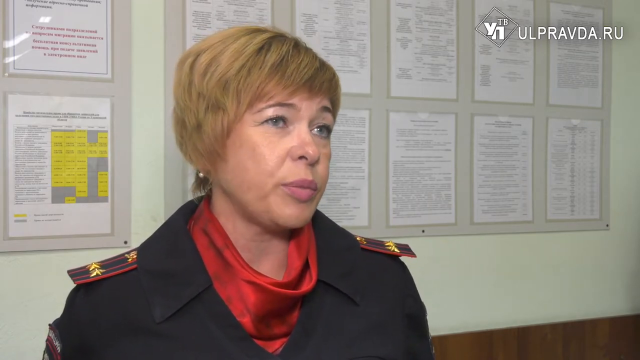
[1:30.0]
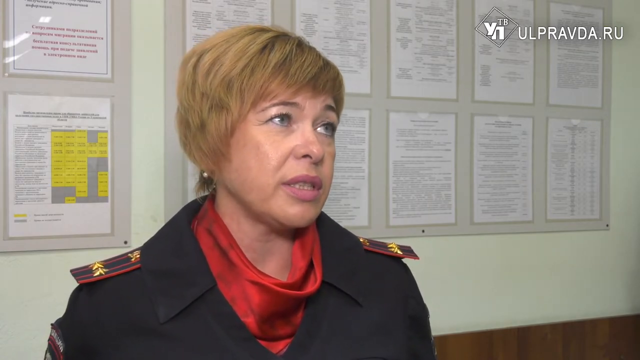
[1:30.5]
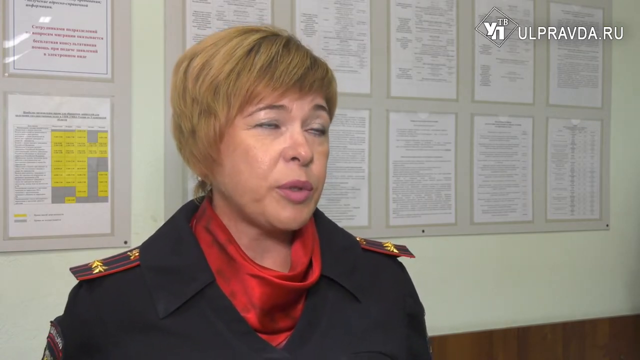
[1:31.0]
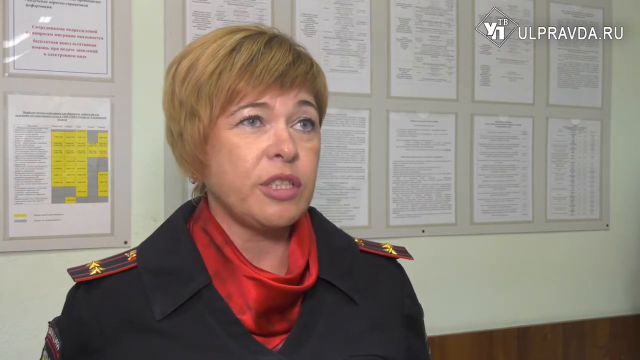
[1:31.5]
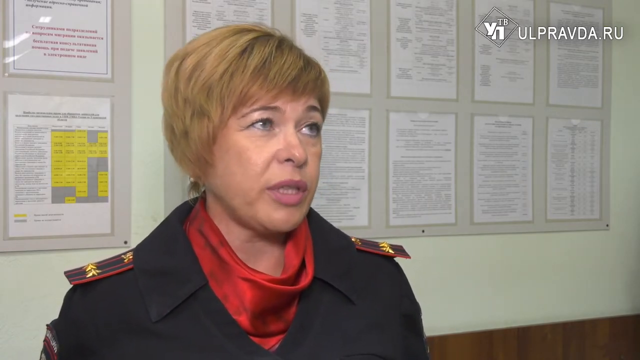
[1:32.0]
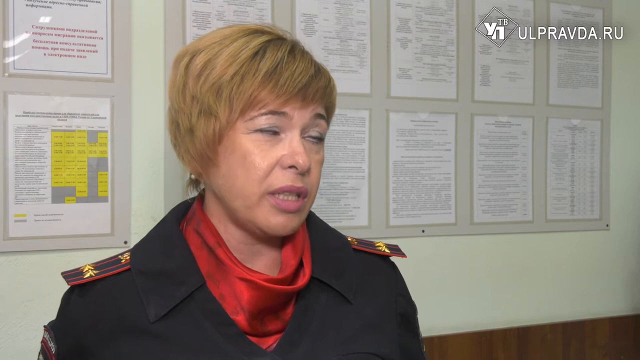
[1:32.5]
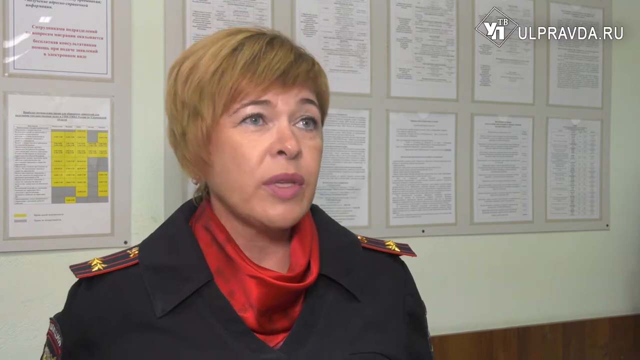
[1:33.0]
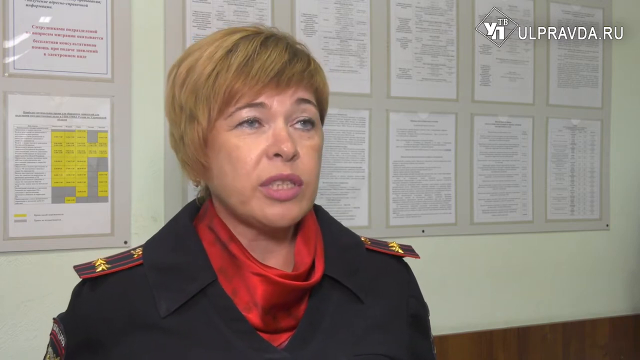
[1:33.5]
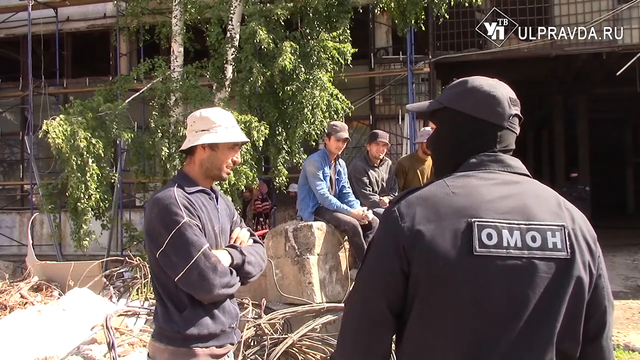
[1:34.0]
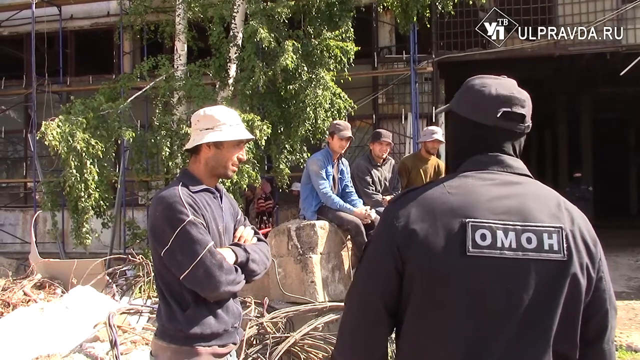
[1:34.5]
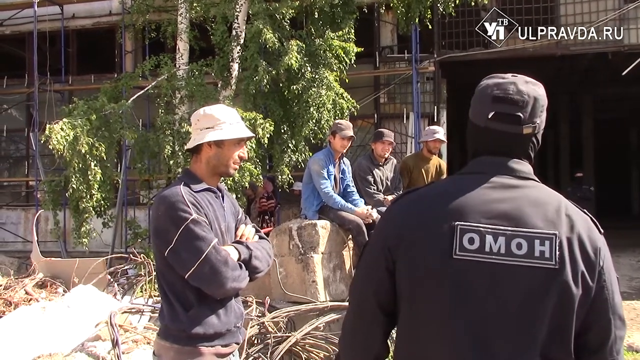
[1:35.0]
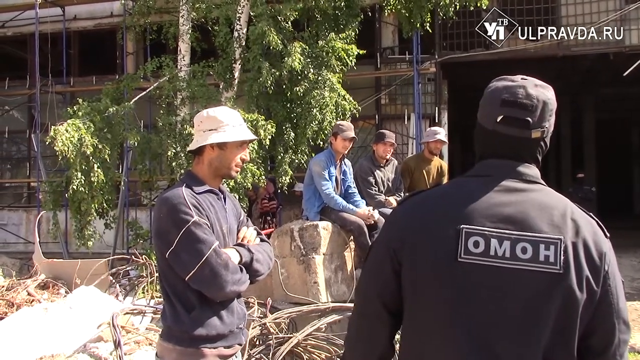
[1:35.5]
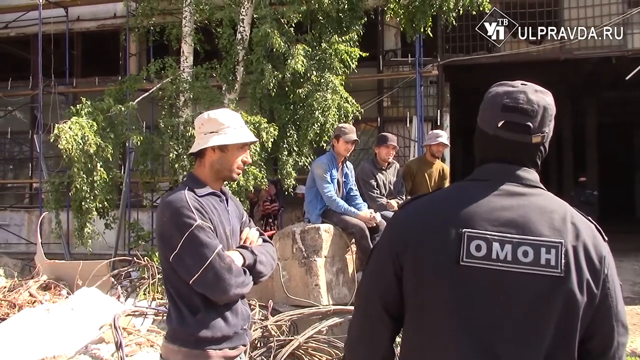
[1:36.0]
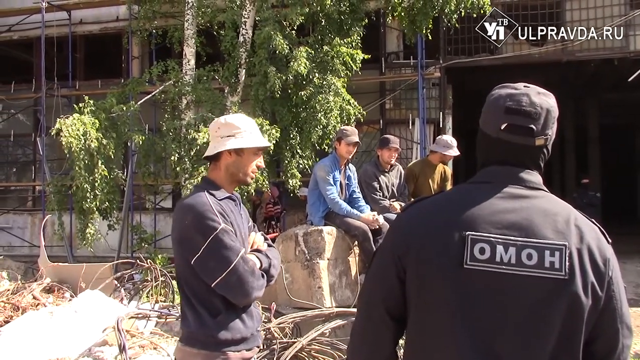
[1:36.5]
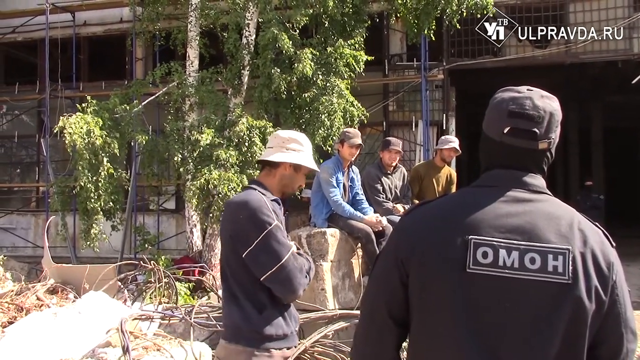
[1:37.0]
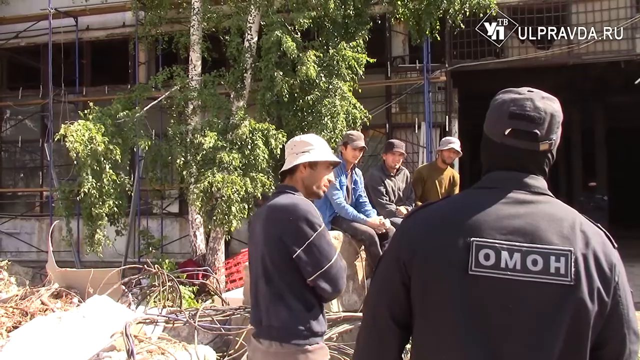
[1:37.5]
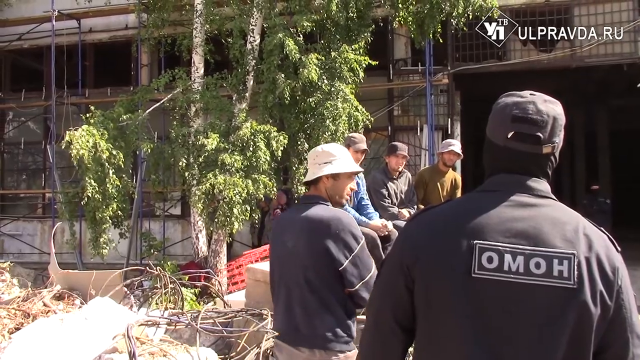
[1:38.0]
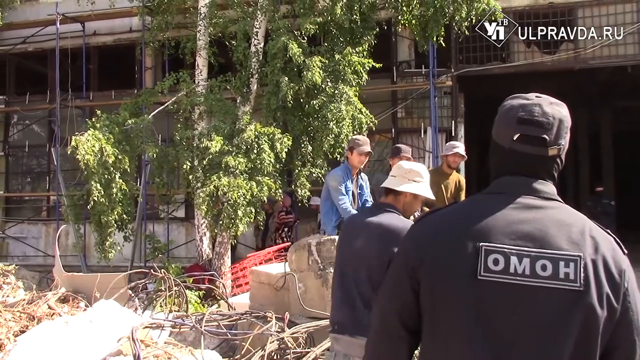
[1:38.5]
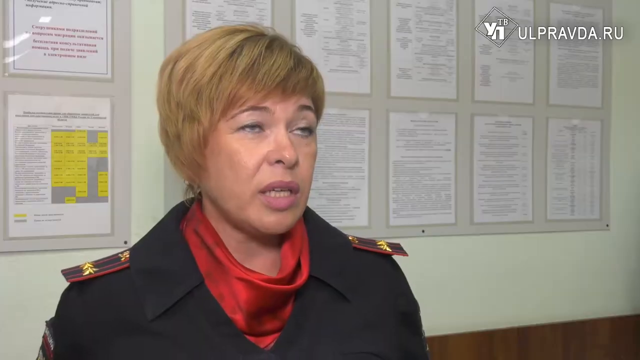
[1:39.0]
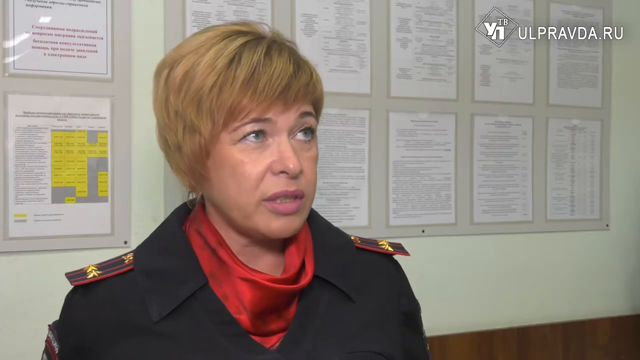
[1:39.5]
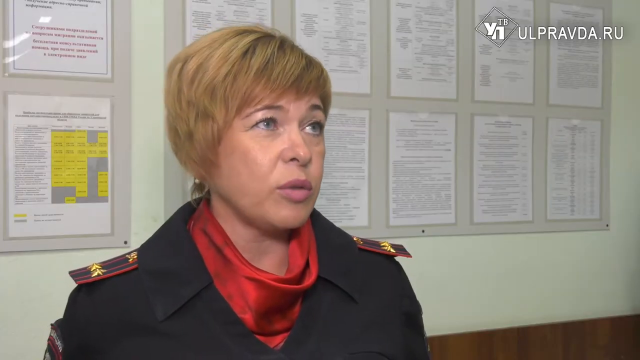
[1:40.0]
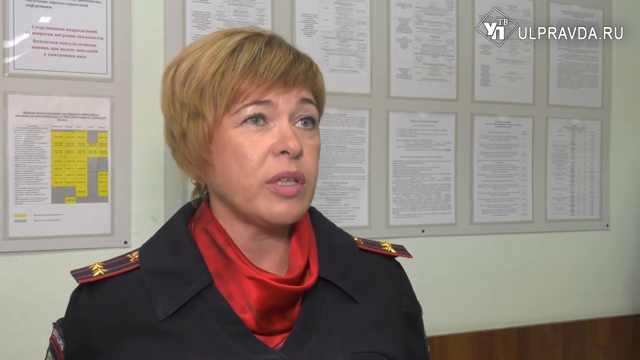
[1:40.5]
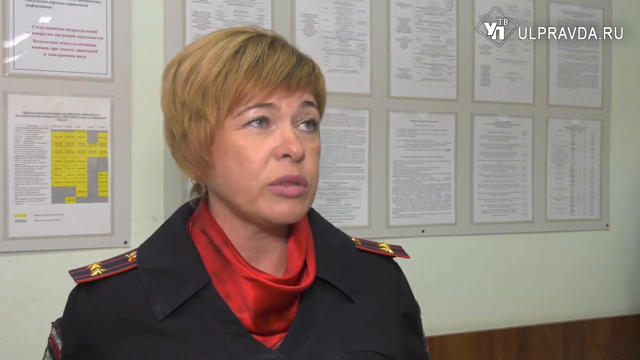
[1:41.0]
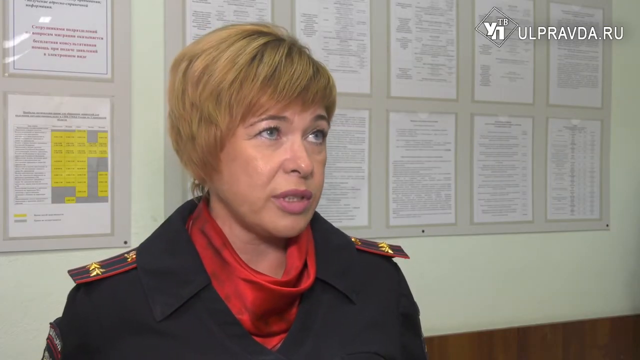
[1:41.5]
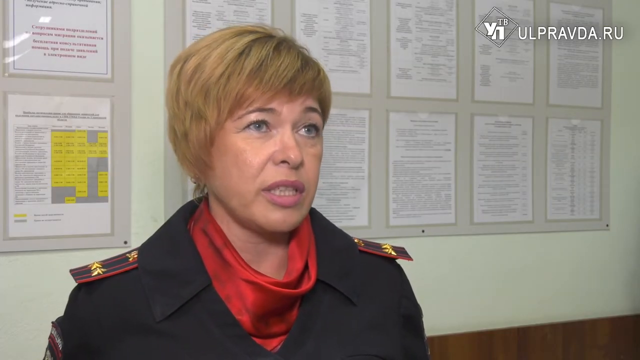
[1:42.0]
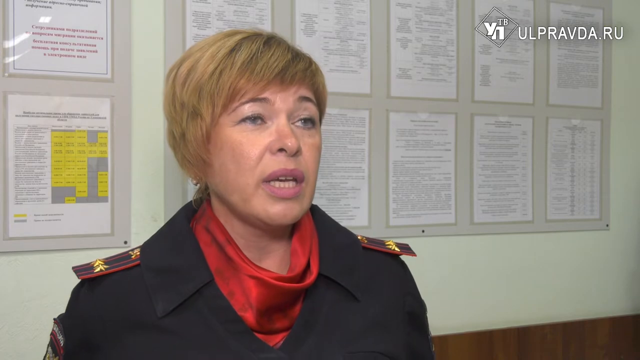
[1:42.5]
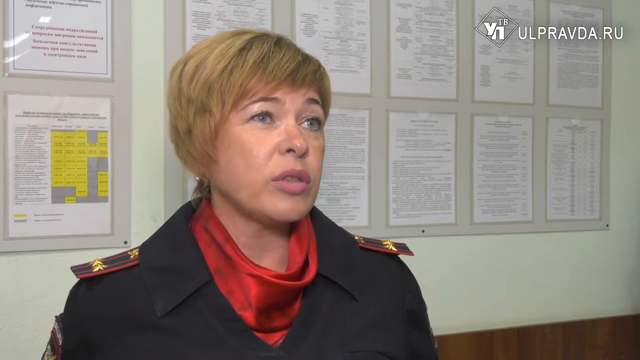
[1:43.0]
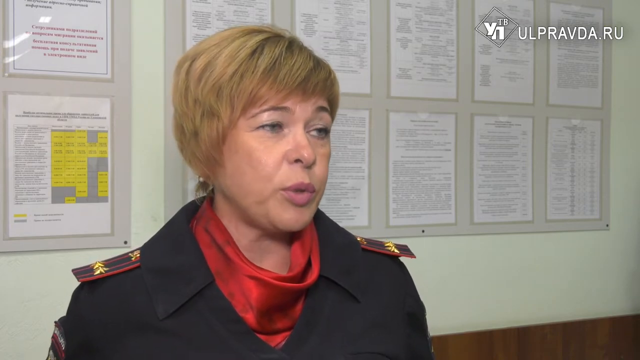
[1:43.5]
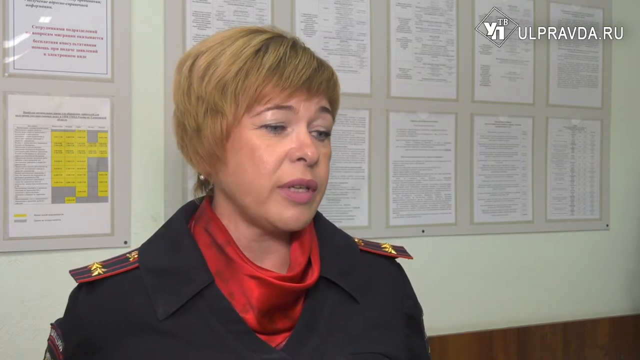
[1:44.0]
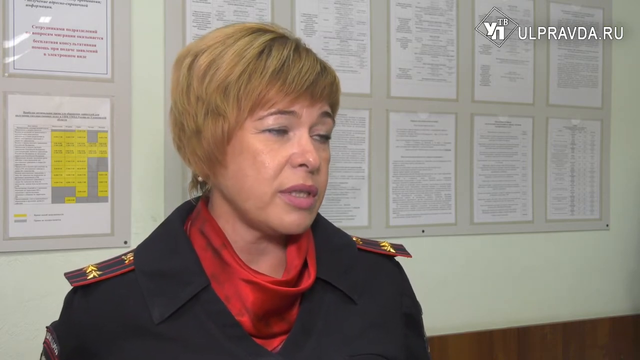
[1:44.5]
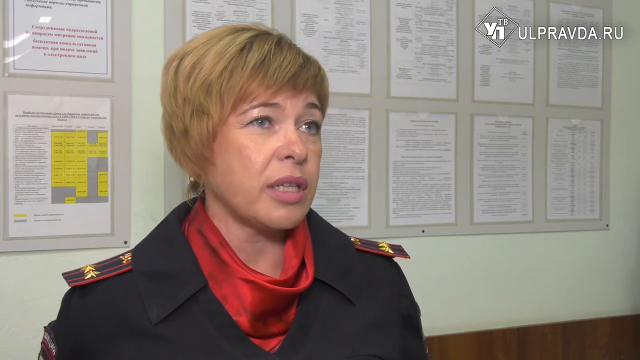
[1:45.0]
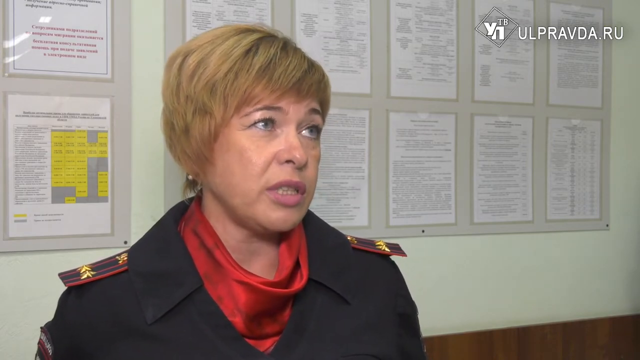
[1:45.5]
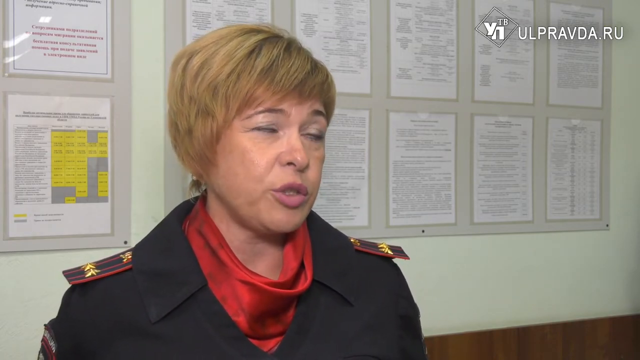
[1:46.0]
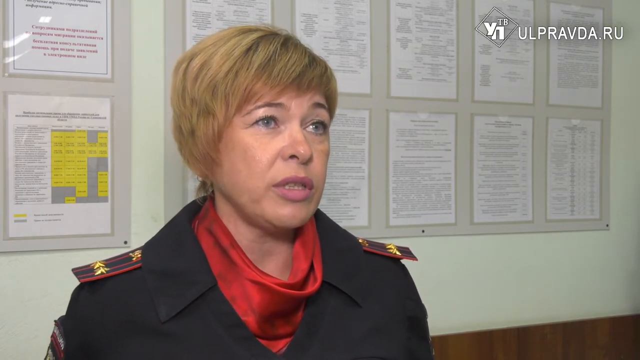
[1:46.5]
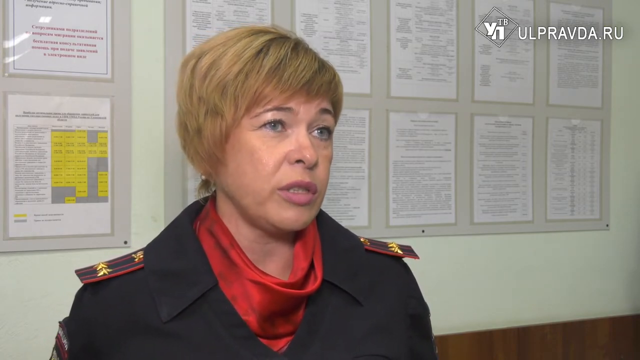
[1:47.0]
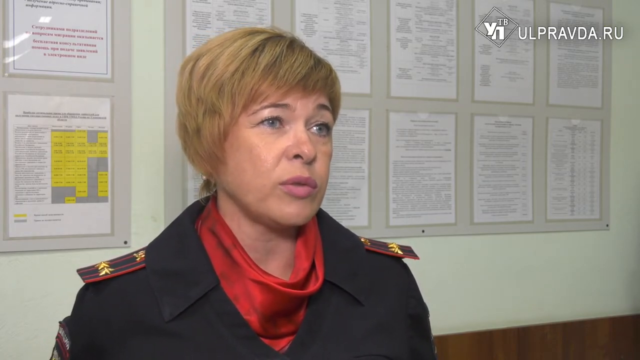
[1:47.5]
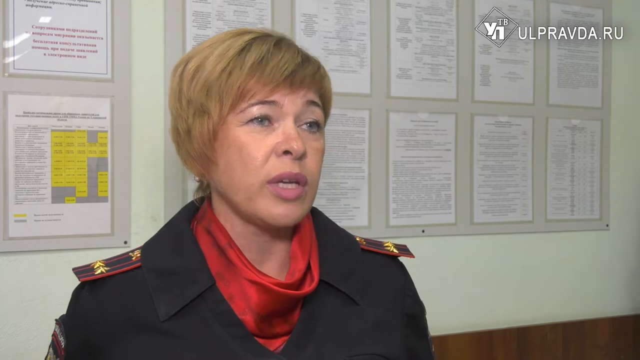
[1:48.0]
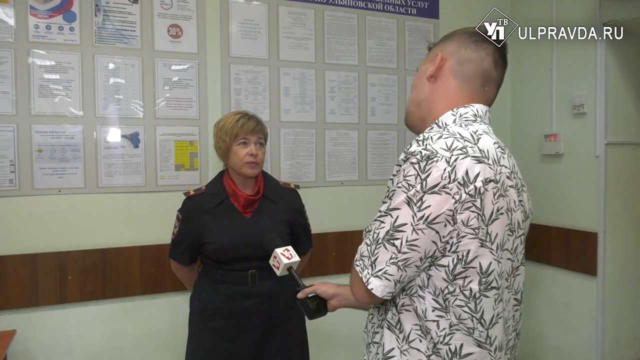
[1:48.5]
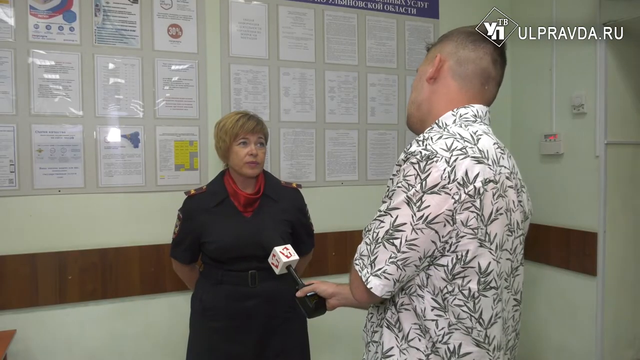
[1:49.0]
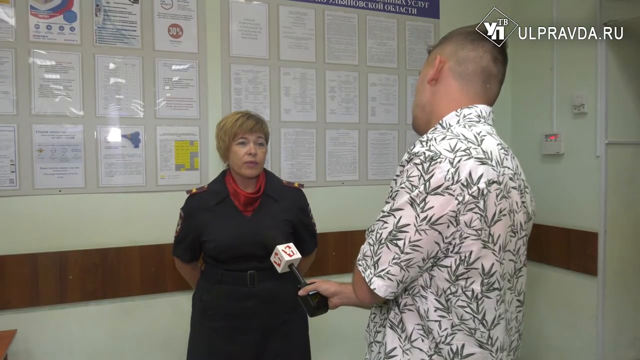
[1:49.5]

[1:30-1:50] A woman who appears to be Russian, with short hair, talks directly to the camera with a serious demeanor. She is being interviewed and is likely describing a process. A Caucasian man looks at her seriously. In the background are many white sheets of paper with writing that is too small to be read.